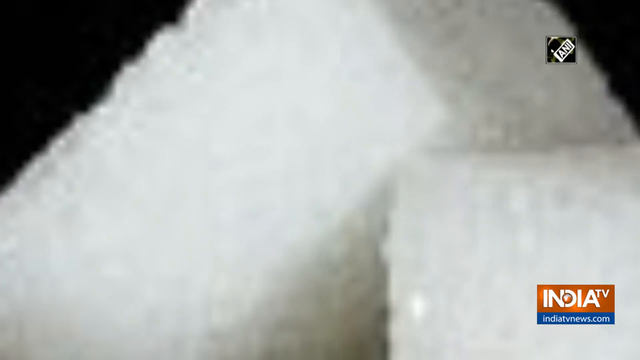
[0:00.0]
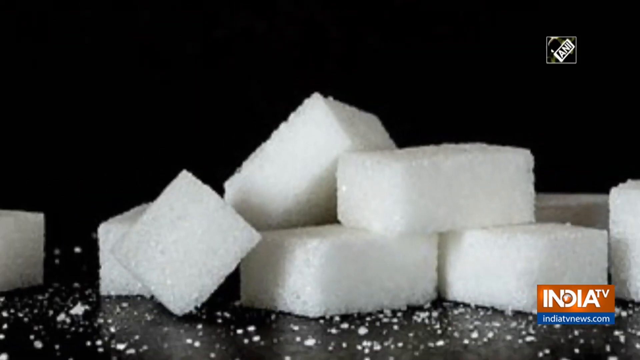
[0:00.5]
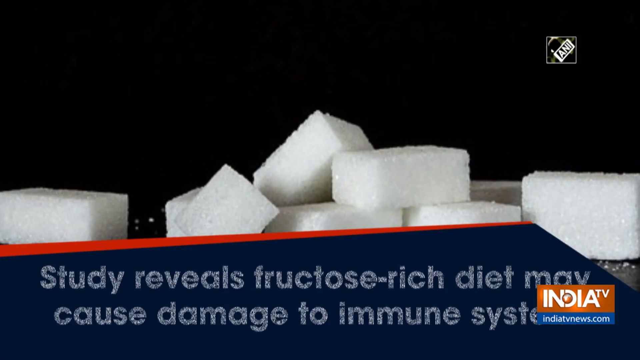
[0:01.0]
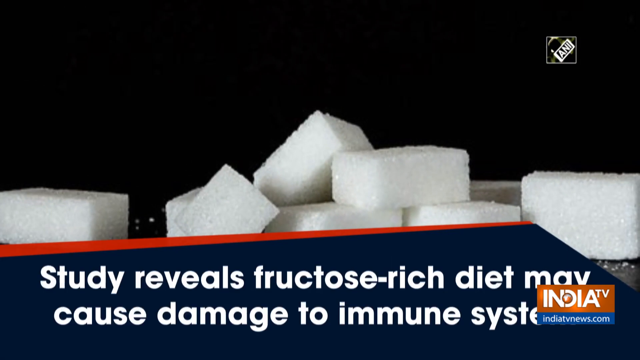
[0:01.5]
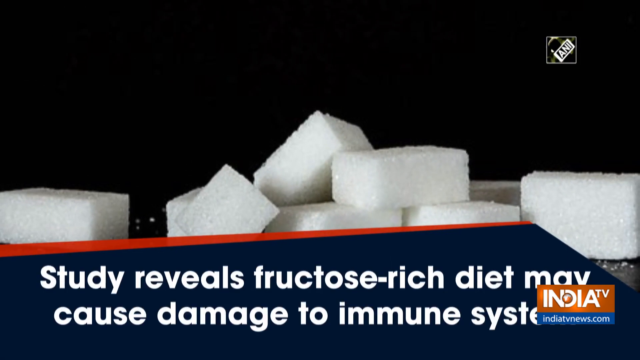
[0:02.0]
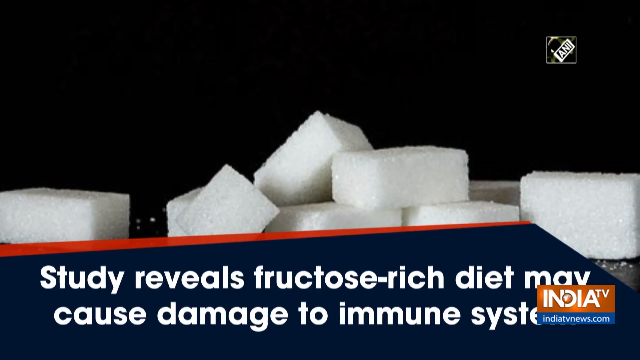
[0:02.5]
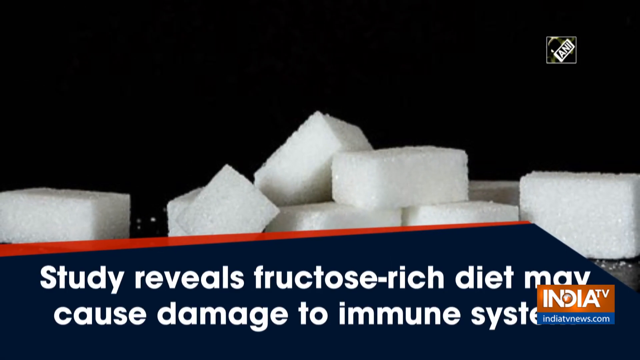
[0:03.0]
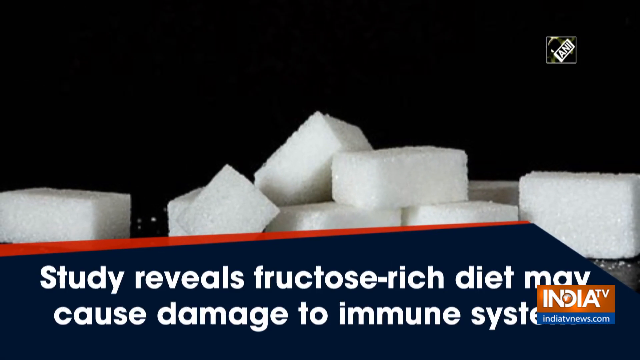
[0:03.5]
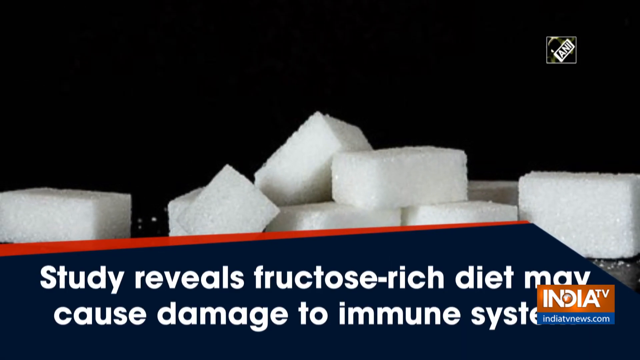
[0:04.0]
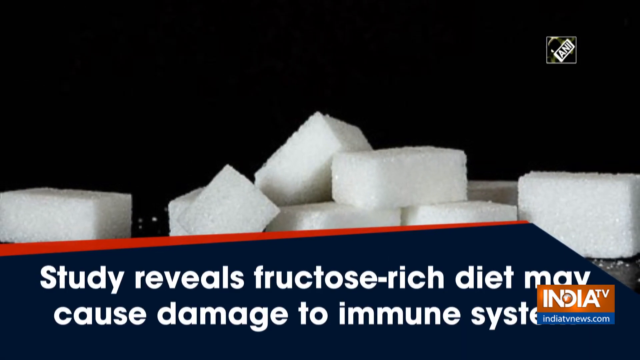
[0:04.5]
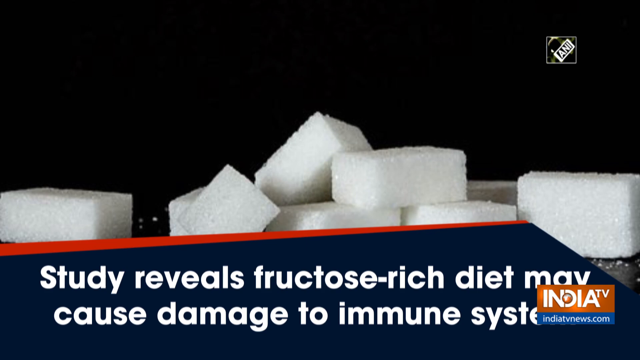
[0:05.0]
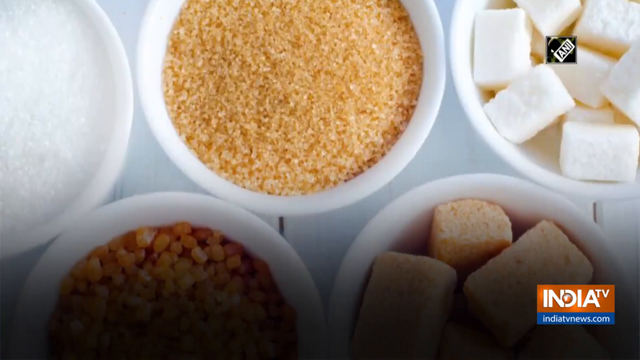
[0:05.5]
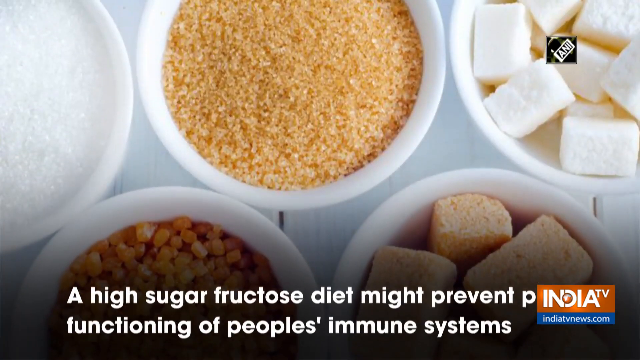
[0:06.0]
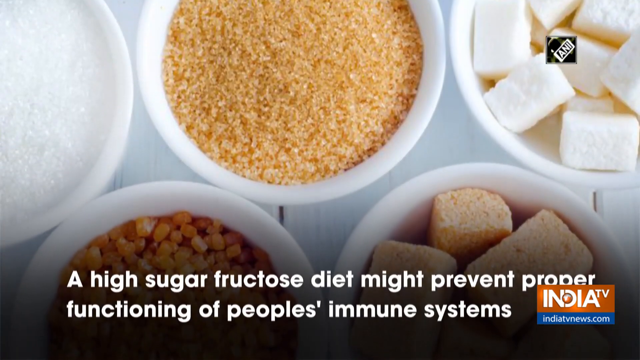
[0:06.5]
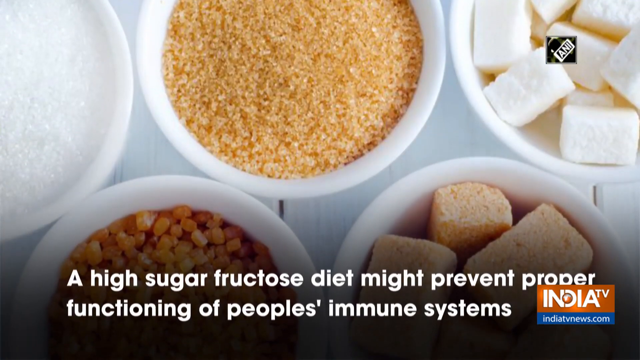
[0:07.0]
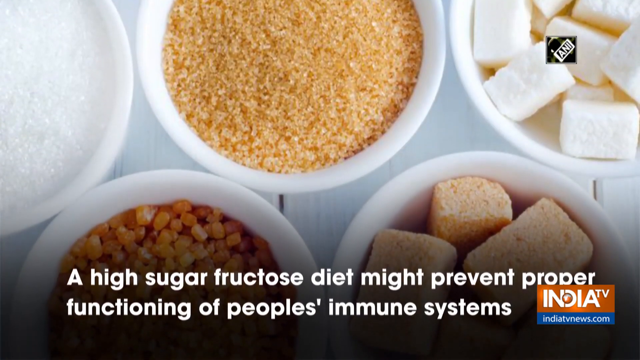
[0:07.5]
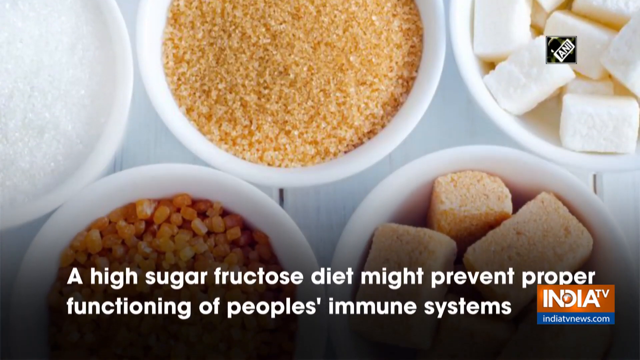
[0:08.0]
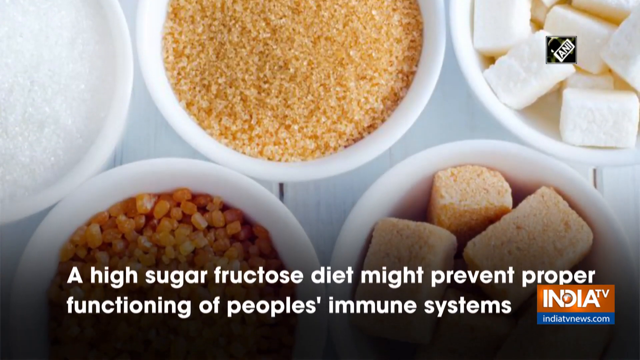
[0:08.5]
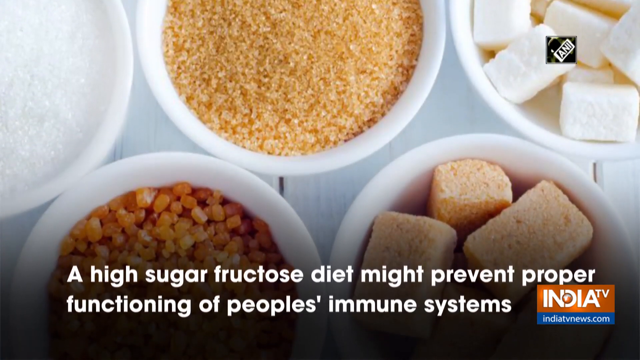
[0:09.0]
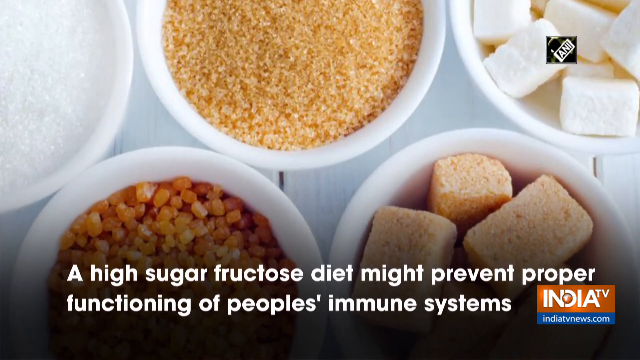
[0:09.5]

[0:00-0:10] The video opens with a close-up of several sugar cubes resting on a table. As the camera pans out, it reveals the cubes. At the very bottom of the screen, text reads "study reveals fructose-rich diet may cause damage to immune system," written in white against a navy blue backdrop. In the lower right-hand corner, the words "India TV" appear in white letters against a red backdrop. After several seconds, the camera pans away to a close-up of five white bowls containing various food products; it is difficult to tell what exactly these foods are.